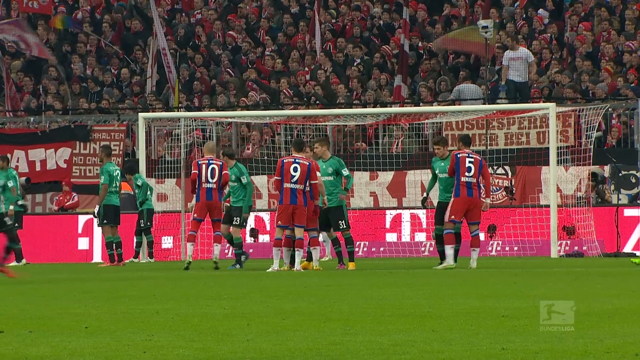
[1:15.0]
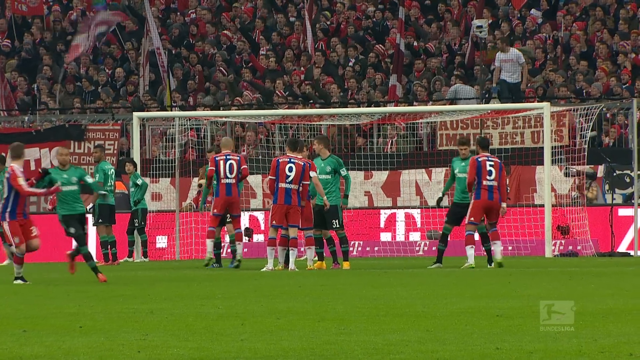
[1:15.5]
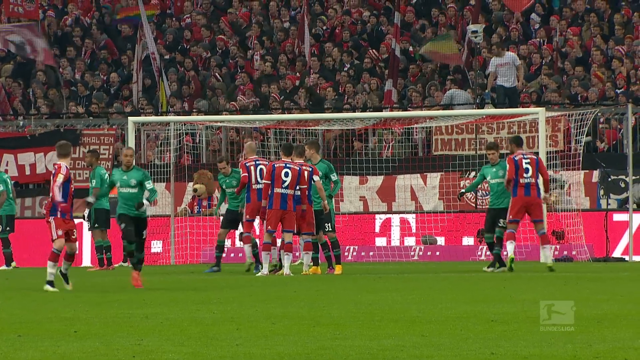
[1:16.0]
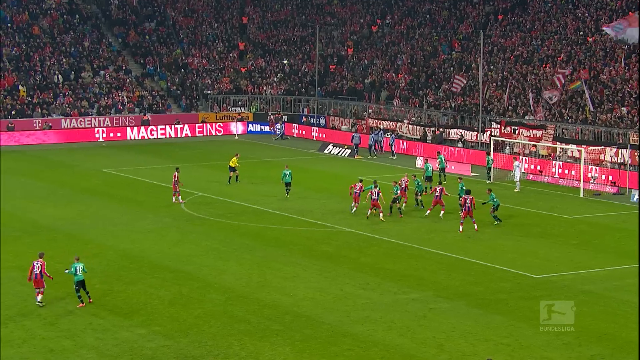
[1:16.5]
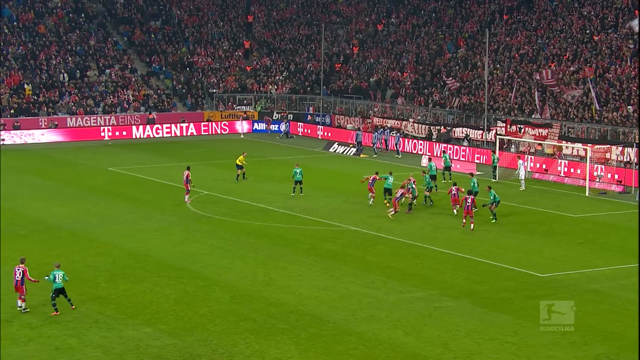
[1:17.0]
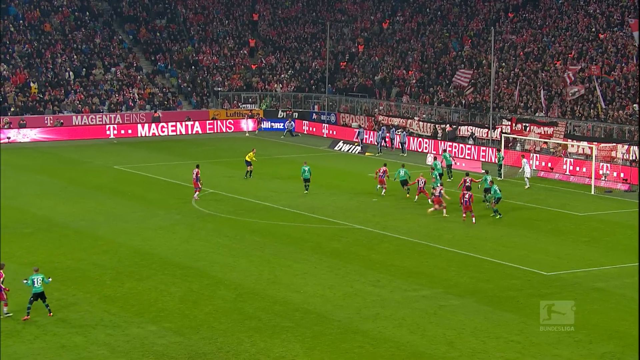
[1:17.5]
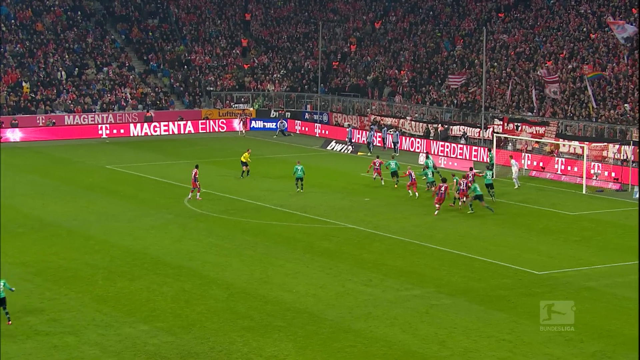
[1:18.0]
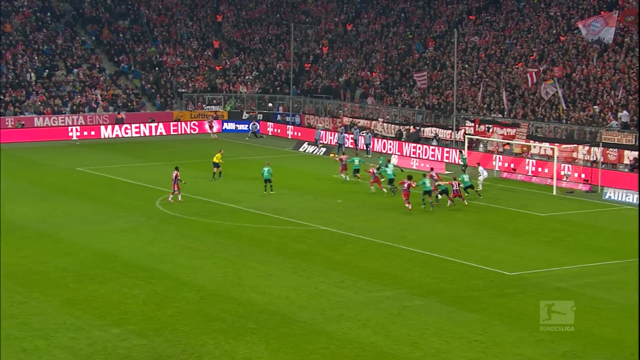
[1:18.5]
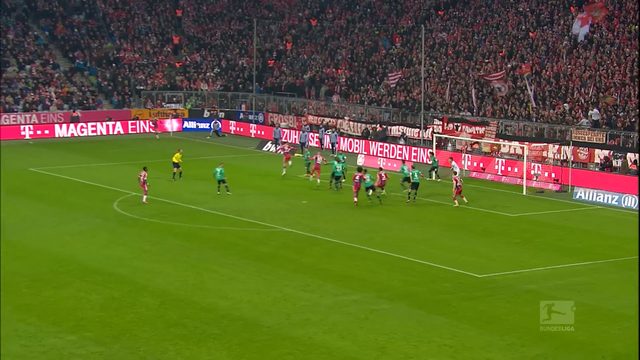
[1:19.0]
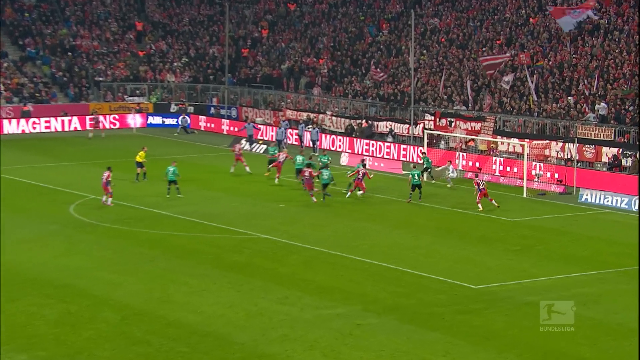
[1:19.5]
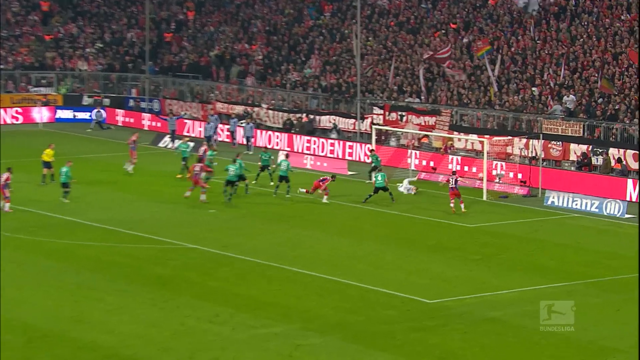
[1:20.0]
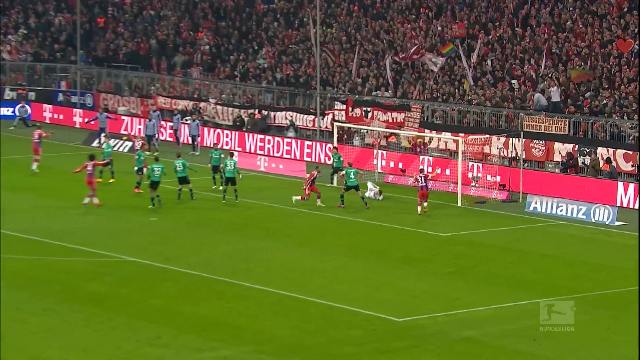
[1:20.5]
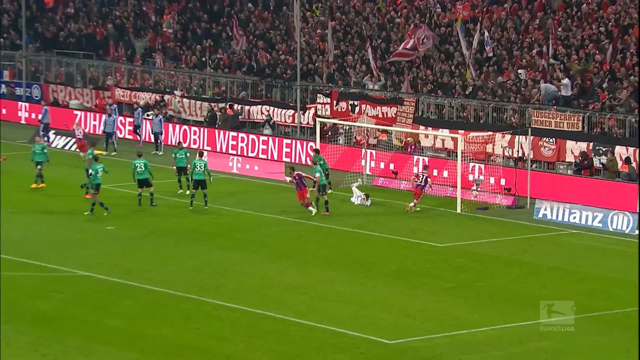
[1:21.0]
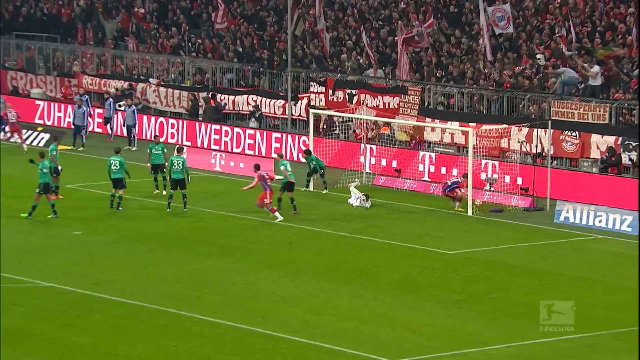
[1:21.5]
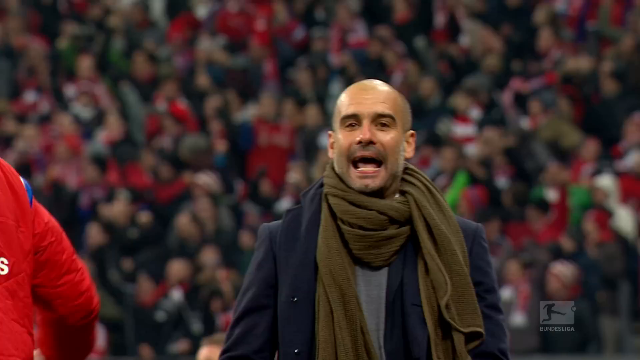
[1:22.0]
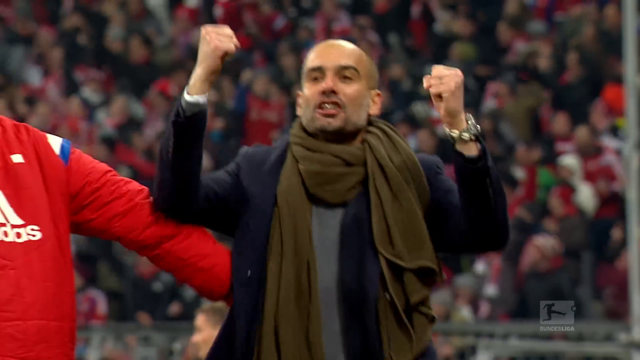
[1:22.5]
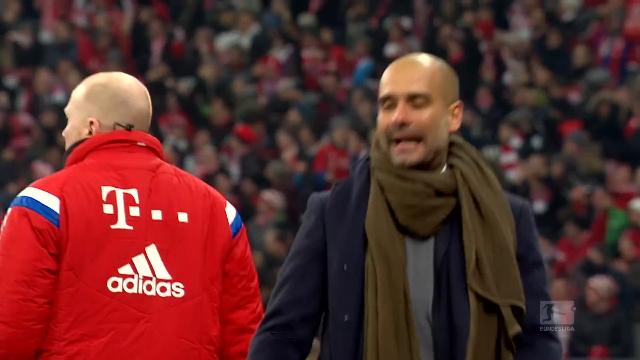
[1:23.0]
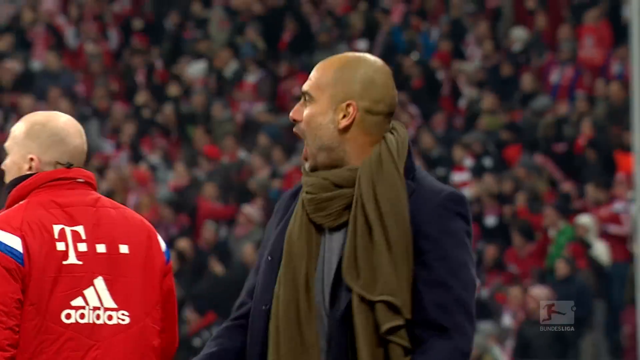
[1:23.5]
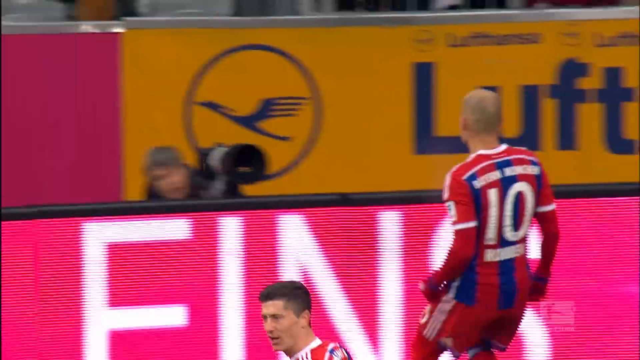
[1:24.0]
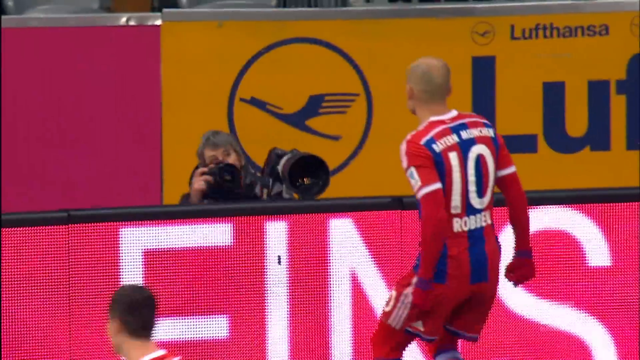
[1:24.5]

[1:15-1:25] Many players are together, both those in green and those in red uniforms with some blue on the top. Players 10, 9 and 5 are visible. A wide shot then shows the soccer ball being kicked across the field, across where many players are gathered, and into the goal net for a score. Right after the score, a player in the red uniform advances toward the ball inside the net and picks it up. The older coach, in an olive muffler and long blue jacket, then talks in a sort of animated way.